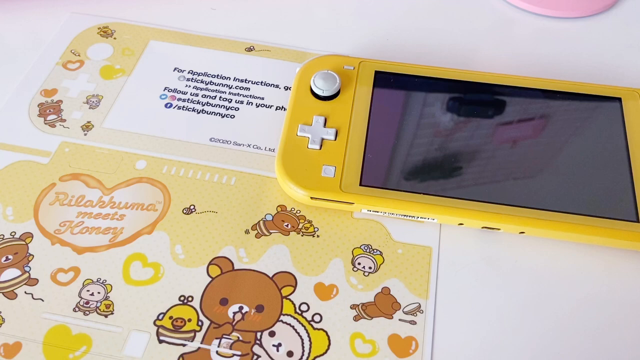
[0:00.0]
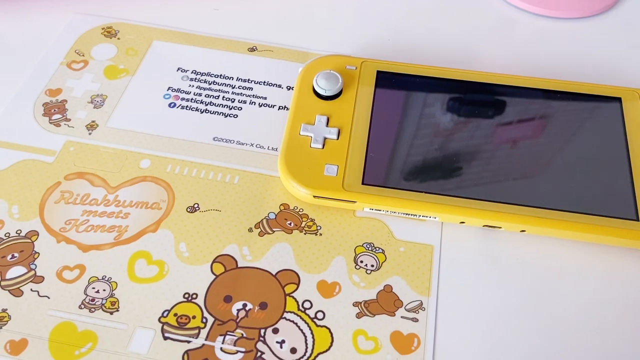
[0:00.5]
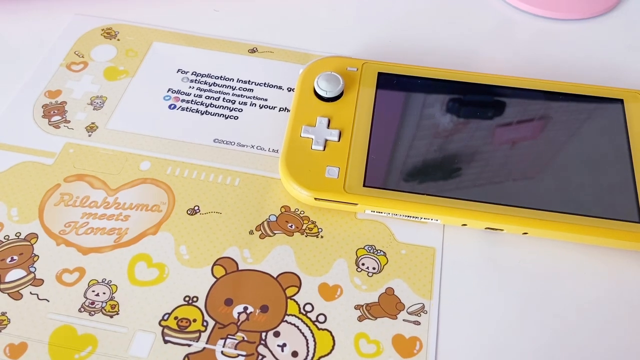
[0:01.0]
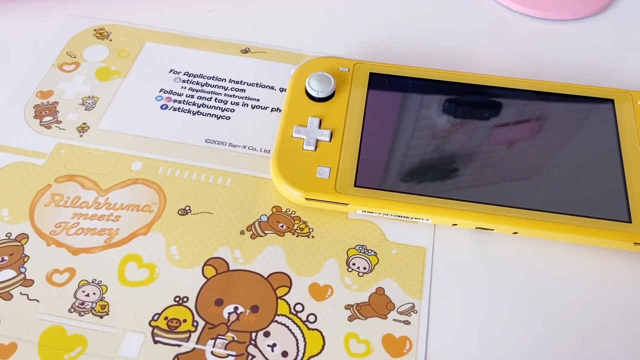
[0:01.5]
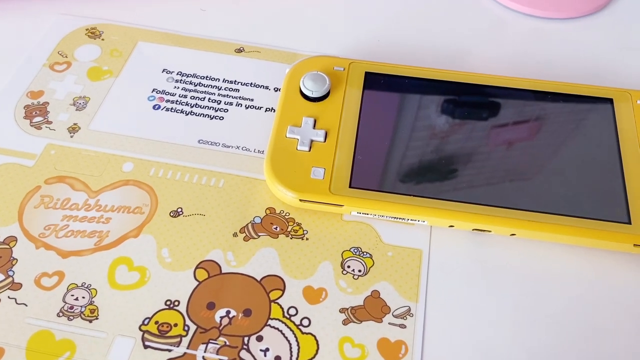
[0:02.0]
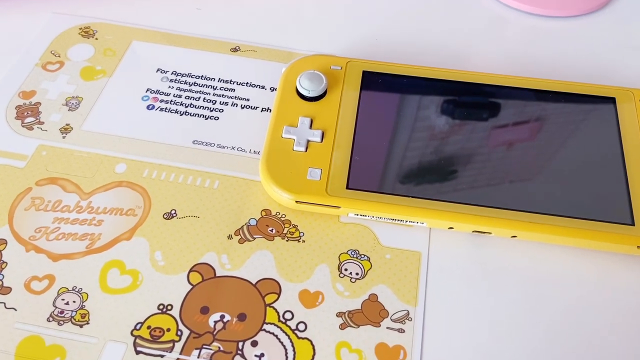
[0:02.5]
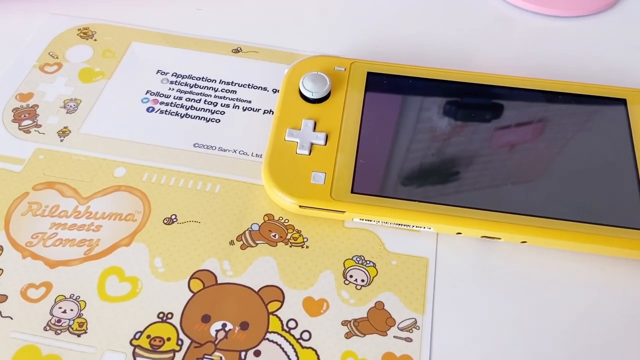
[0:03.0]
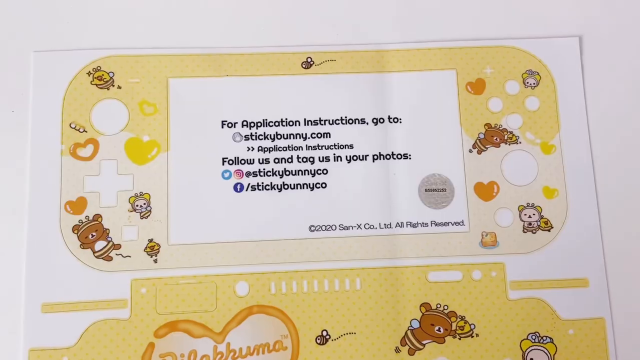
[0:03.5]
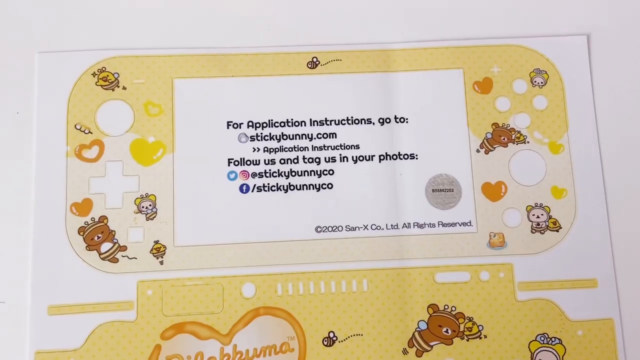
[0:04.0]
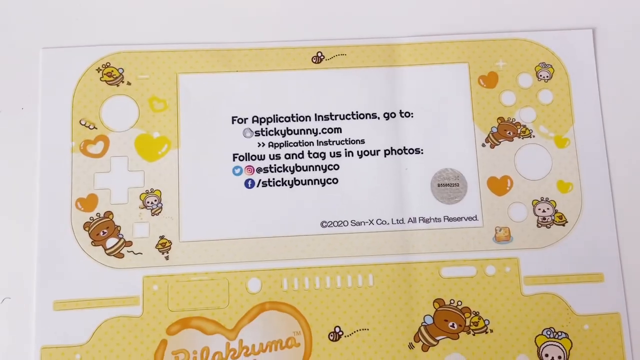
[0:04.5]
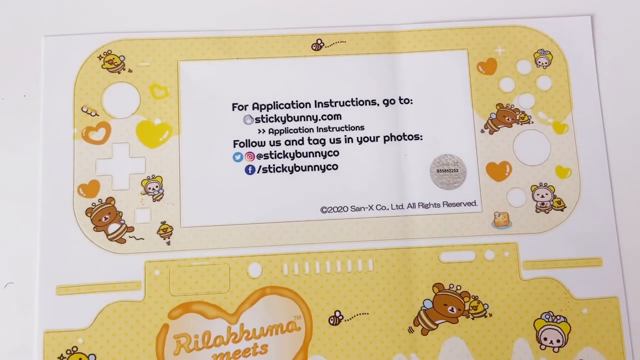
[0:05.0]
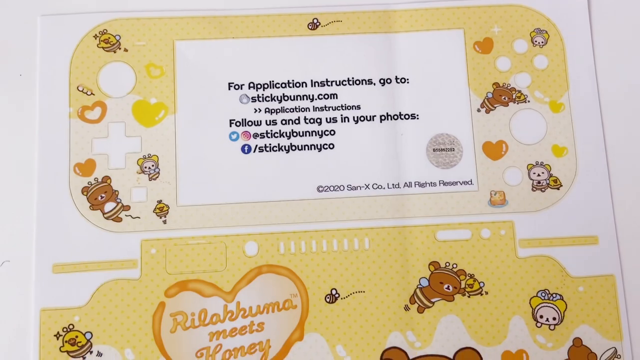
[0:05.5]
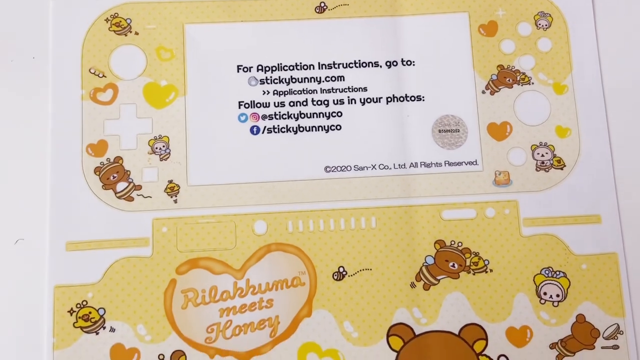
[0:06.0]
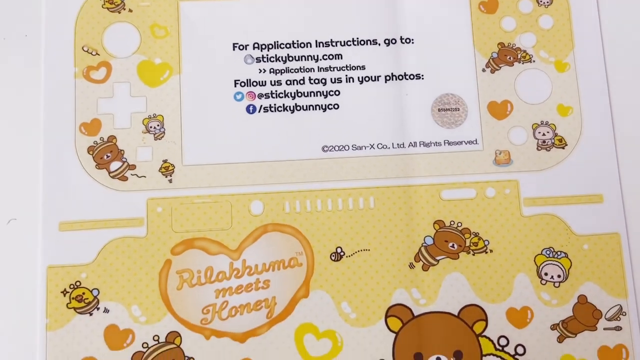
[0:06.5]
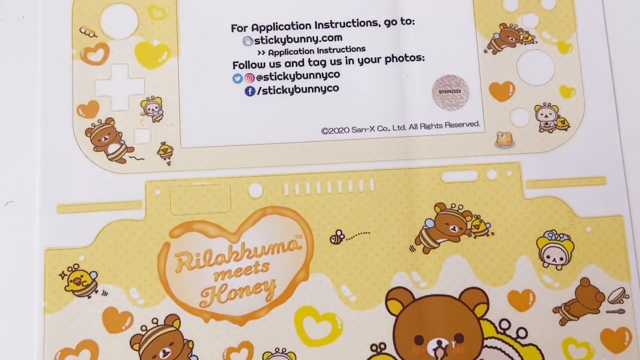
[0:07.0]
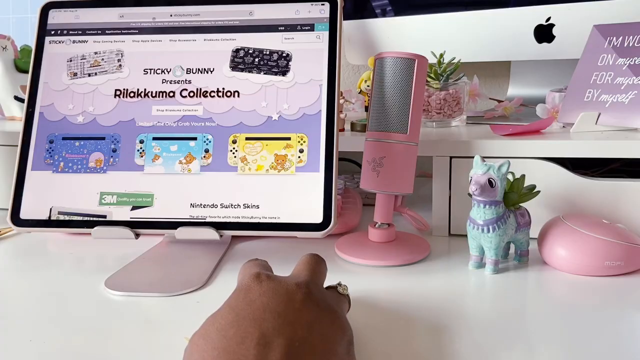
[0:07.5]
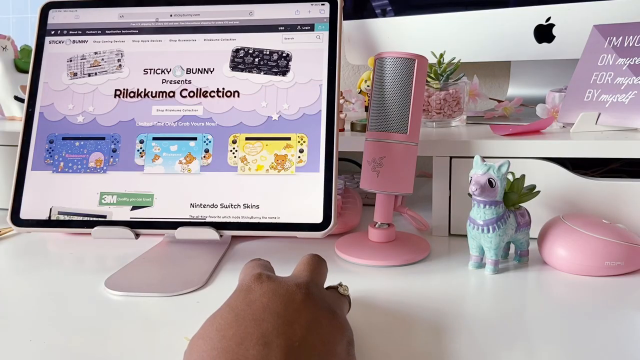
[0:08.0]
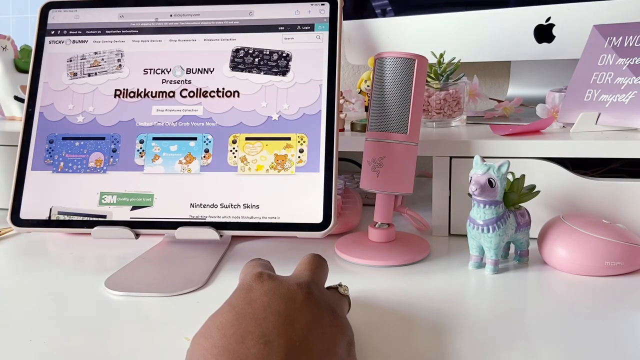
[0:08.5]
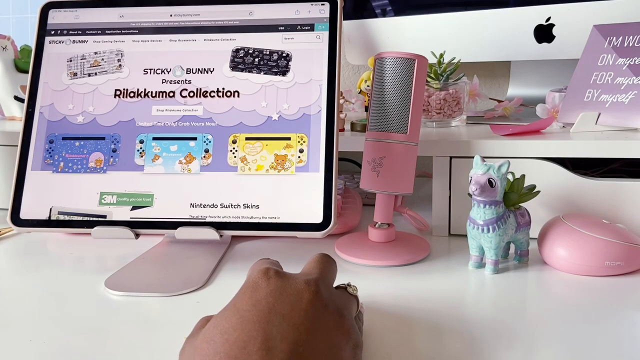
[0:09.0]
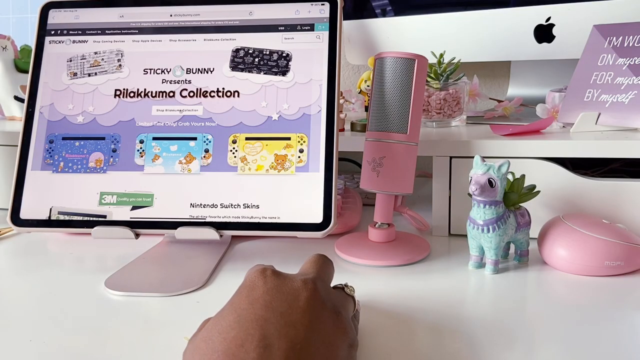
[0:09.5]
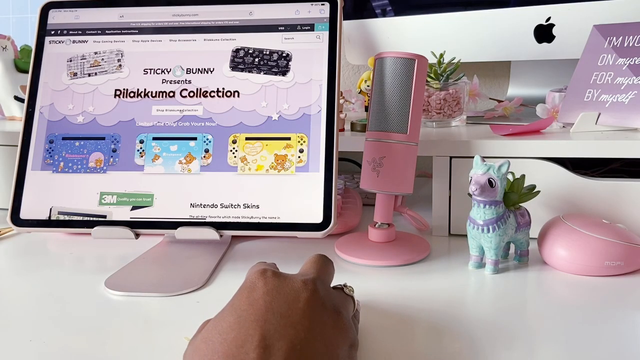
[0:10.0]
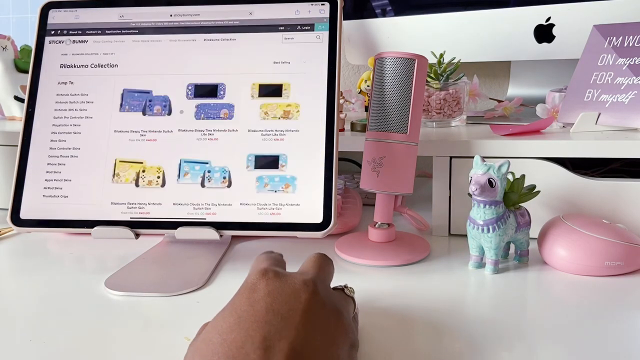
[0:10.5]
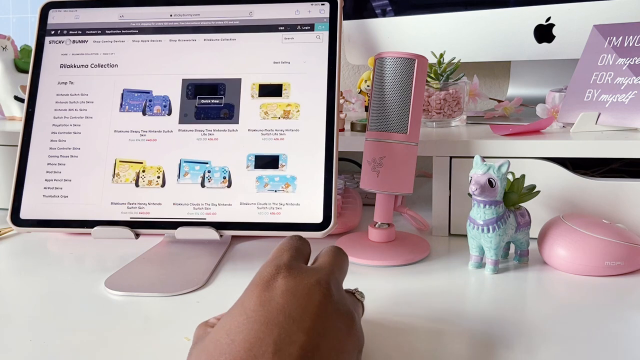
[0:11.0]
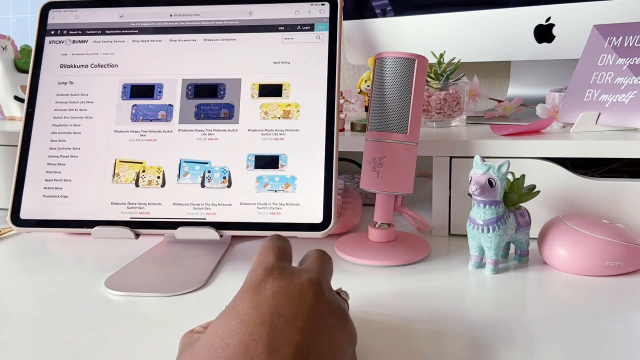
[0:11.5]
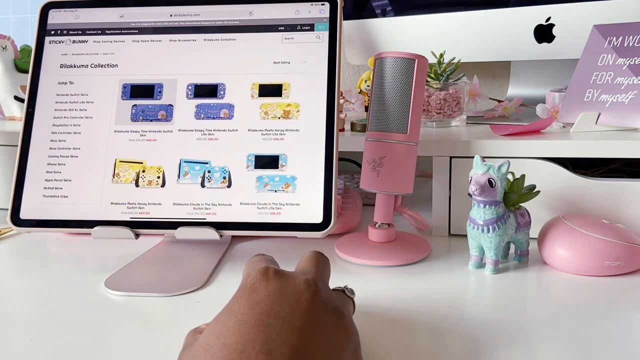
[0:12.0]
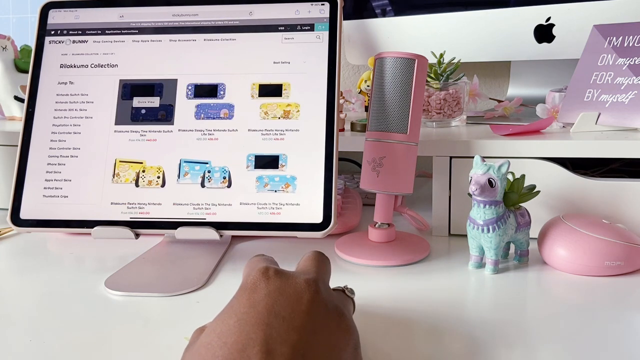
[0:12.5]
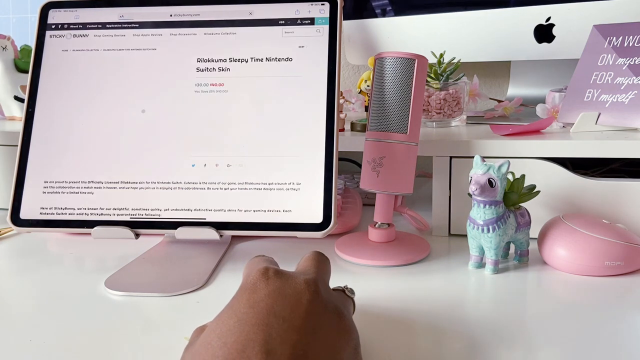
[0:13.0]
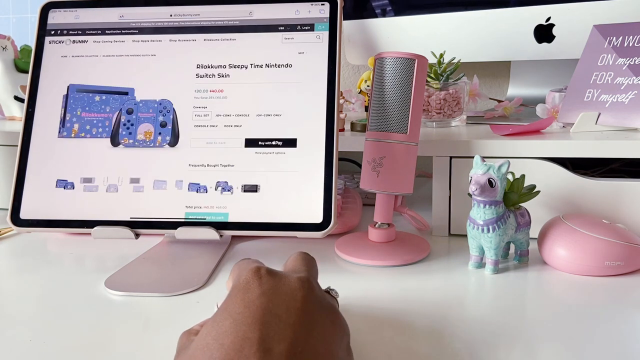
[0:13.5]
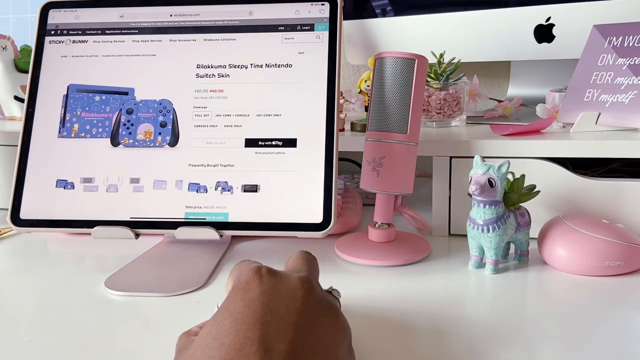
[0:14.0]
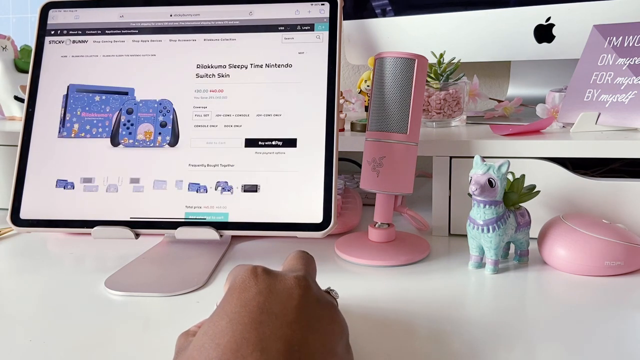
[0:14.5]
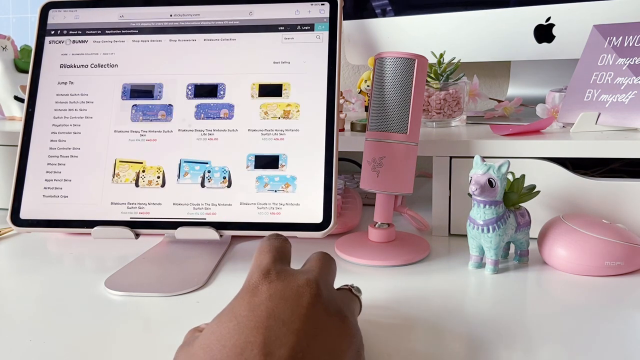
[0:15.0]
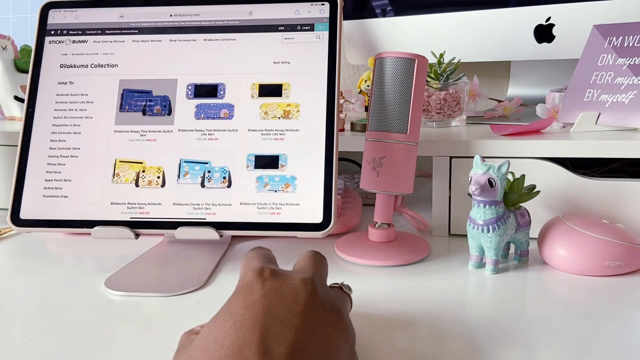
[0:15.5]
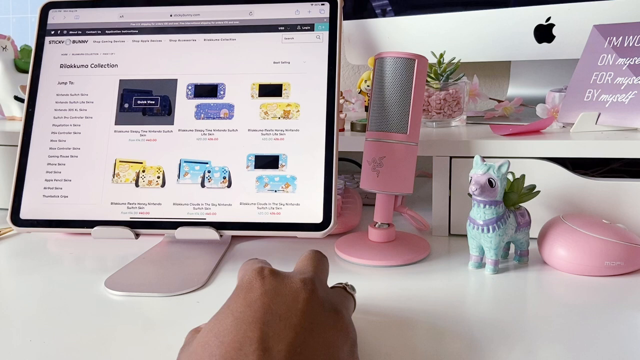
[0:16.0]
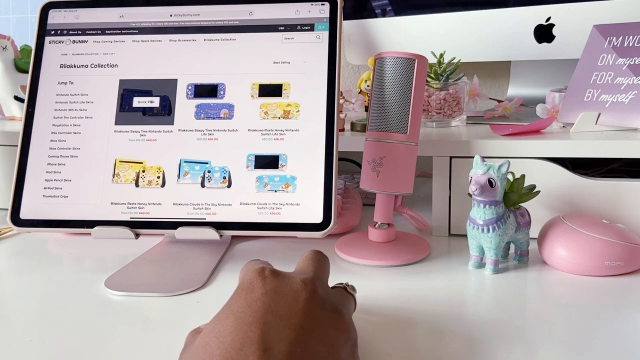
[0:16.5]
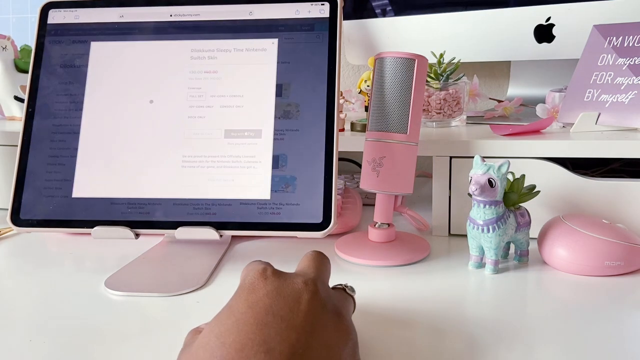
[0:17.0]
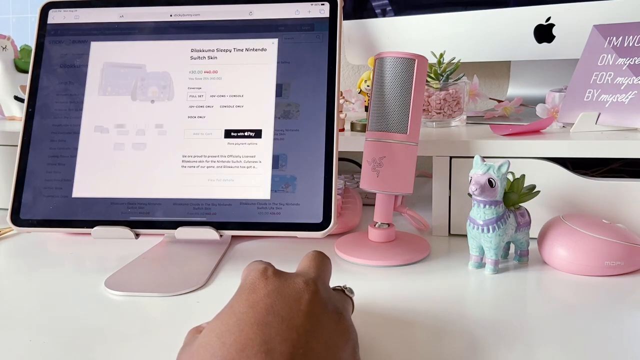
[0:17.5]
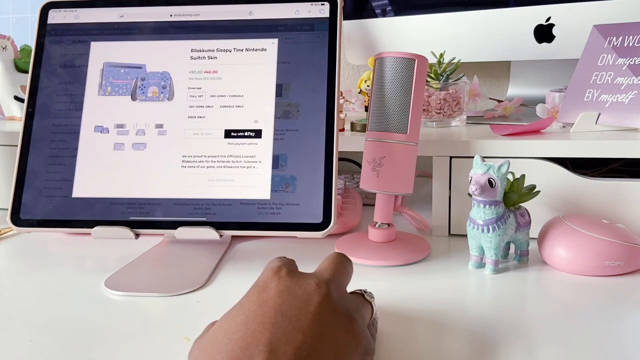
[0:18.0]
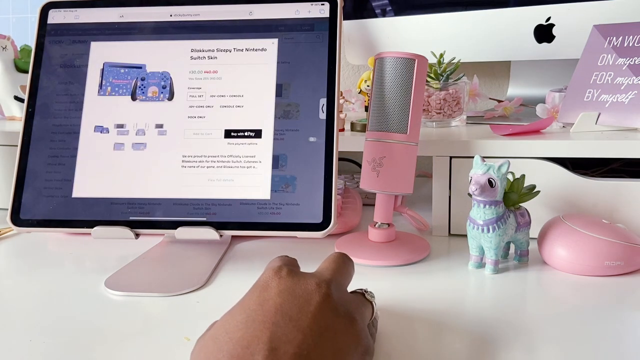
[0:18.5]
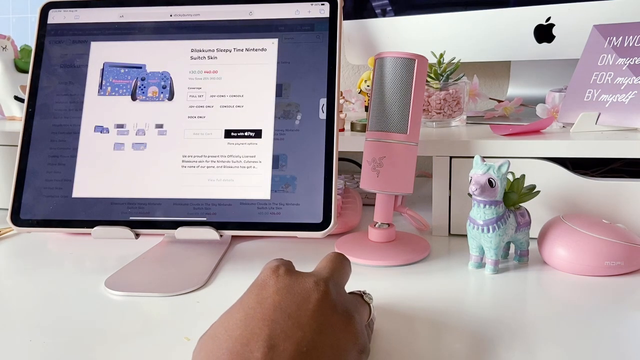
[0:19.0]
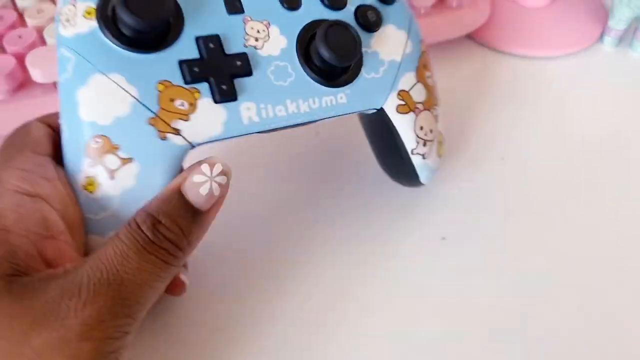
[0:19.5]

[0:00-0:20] A small yellow and white console is framed on a white surface that also holds a sheet of paper with various graphics and drawings in different colors. Next, a white desk appears with several objects on it, some pink and others blue and purple. On the left side of the screen there is a monitor, probably a tablet, and in the lower part of the frame a hand wearing a ring on the ring finger moves, staying within that portion of the frame. Finally, a joypad with graphics and text in different colors is shown; a hand in the lower left corner holds it from one side. In the upper left corner, a pink keyboard with rounded shapes is clearly visible.